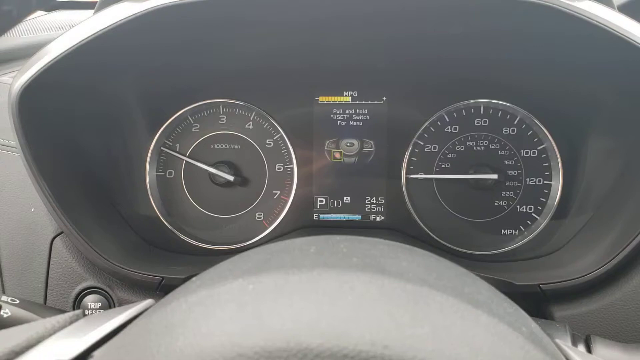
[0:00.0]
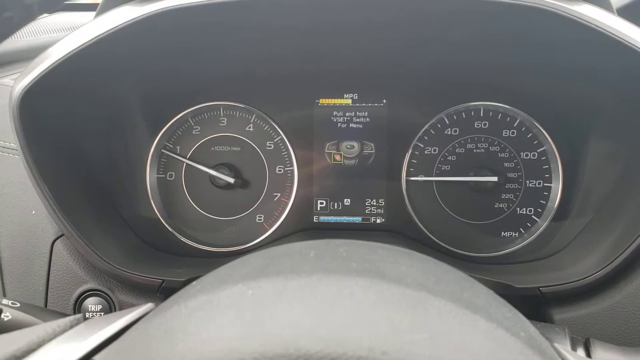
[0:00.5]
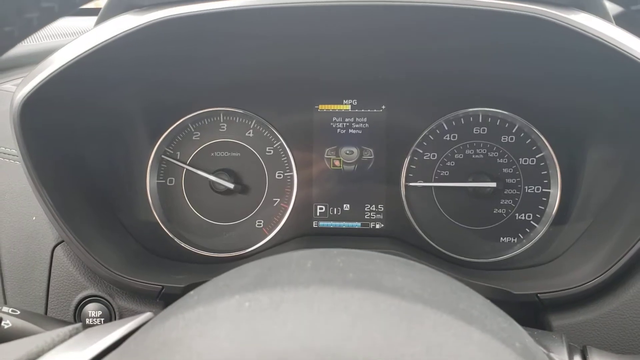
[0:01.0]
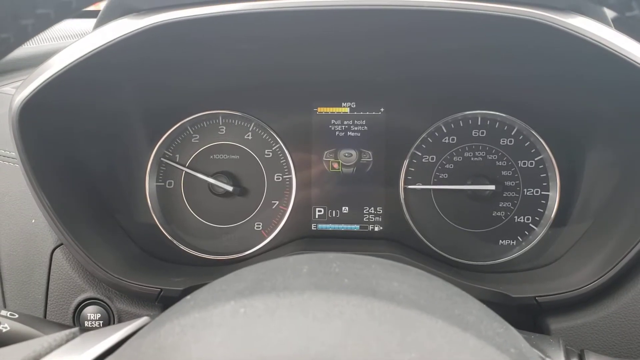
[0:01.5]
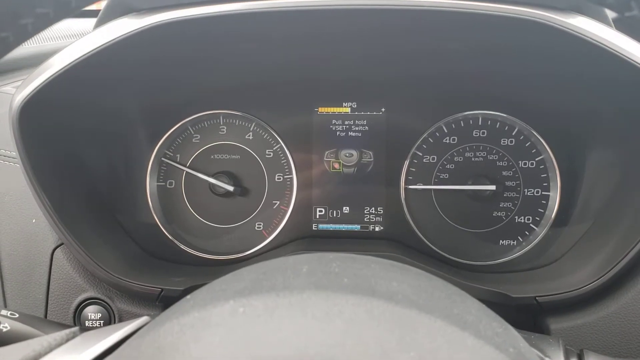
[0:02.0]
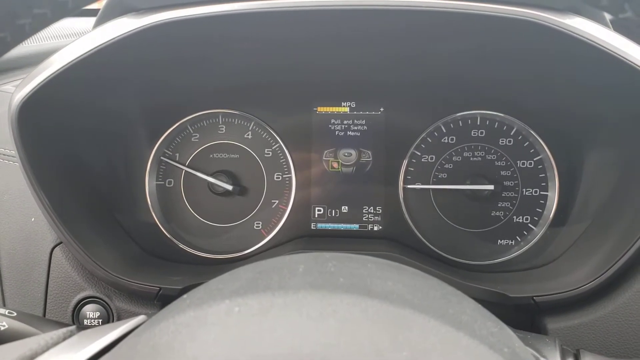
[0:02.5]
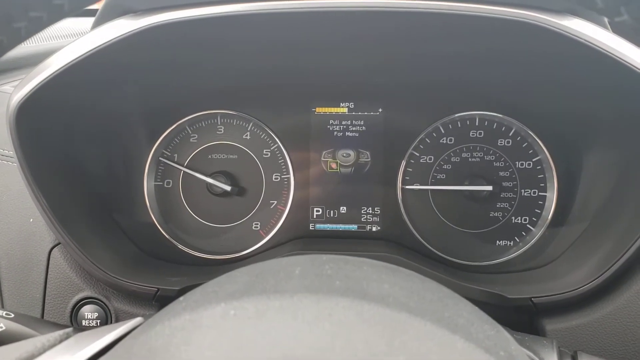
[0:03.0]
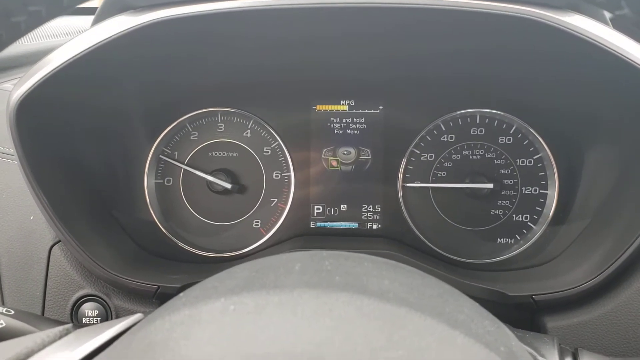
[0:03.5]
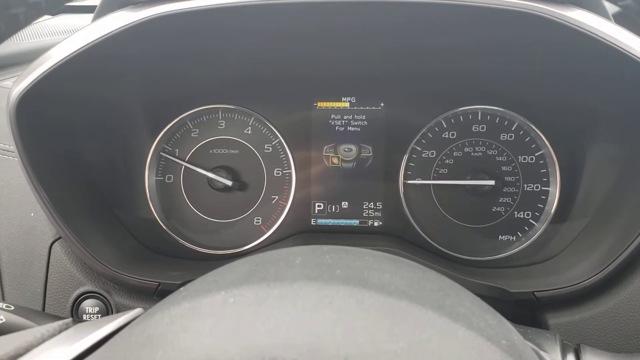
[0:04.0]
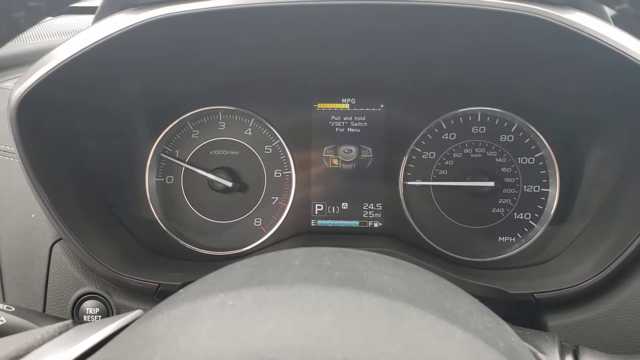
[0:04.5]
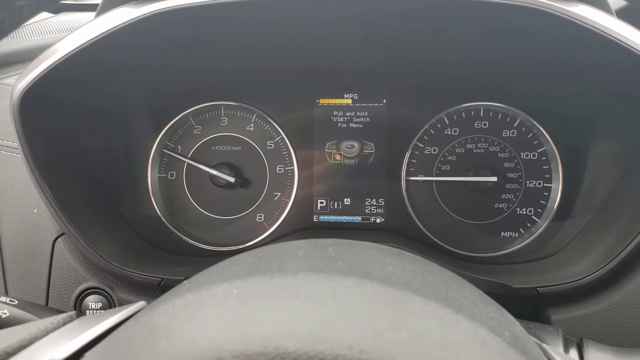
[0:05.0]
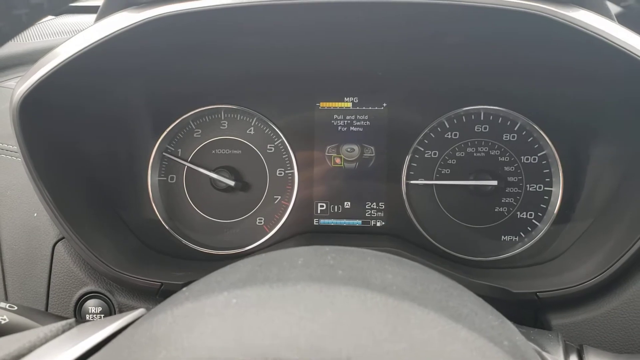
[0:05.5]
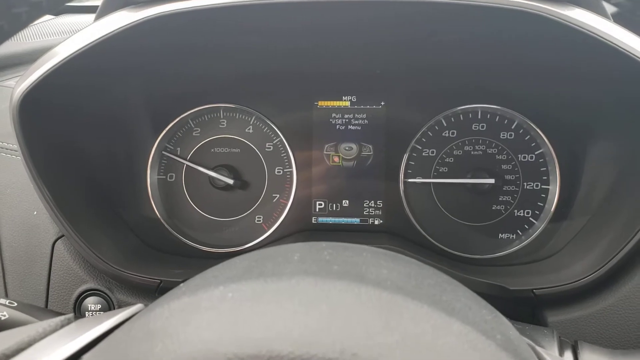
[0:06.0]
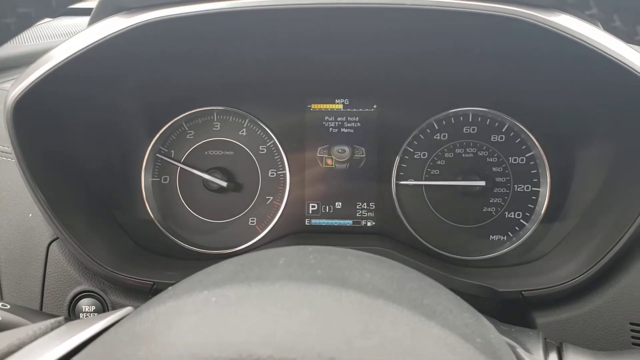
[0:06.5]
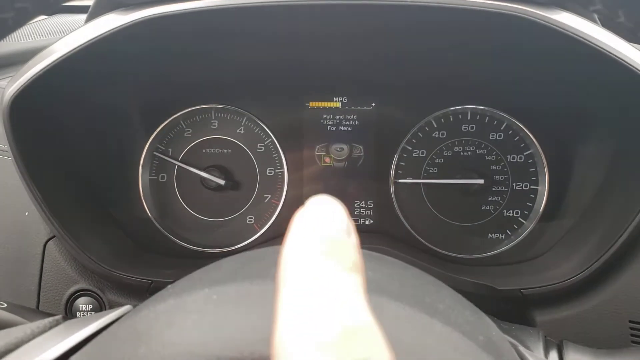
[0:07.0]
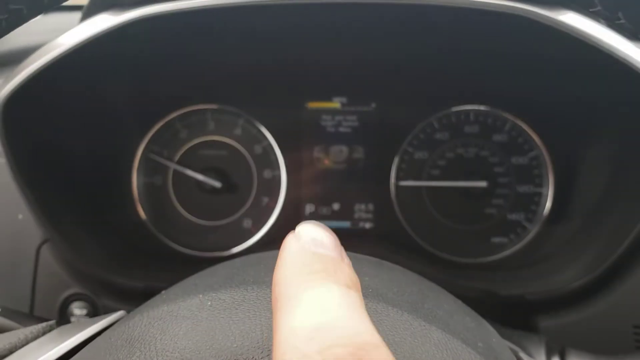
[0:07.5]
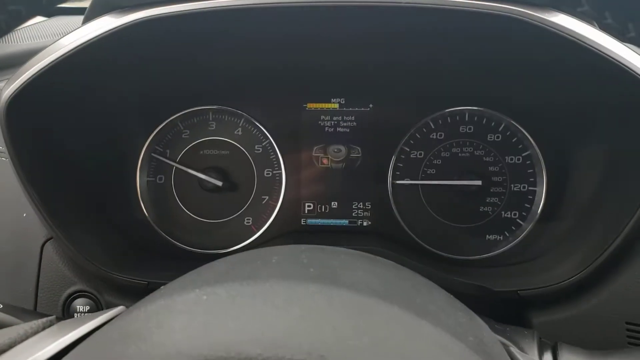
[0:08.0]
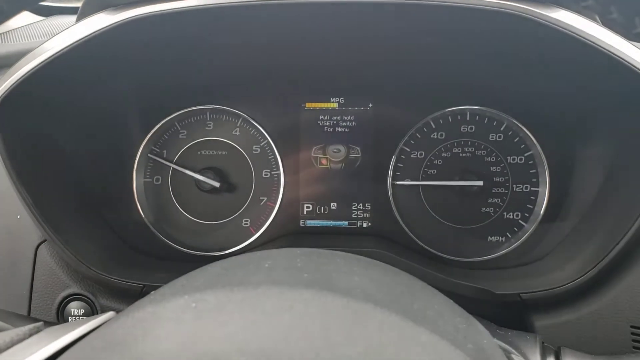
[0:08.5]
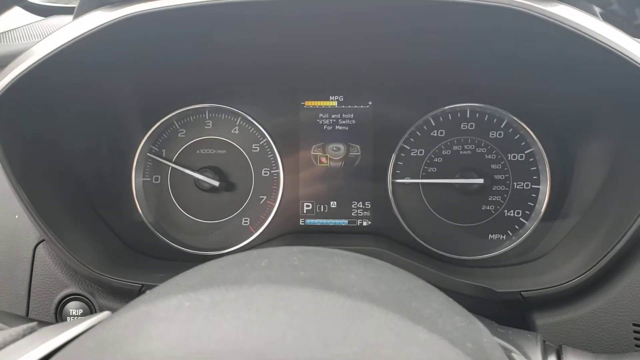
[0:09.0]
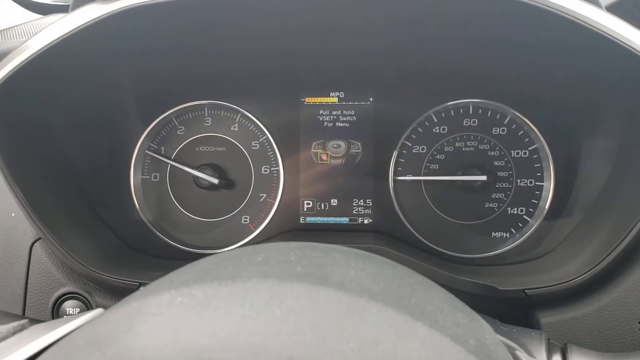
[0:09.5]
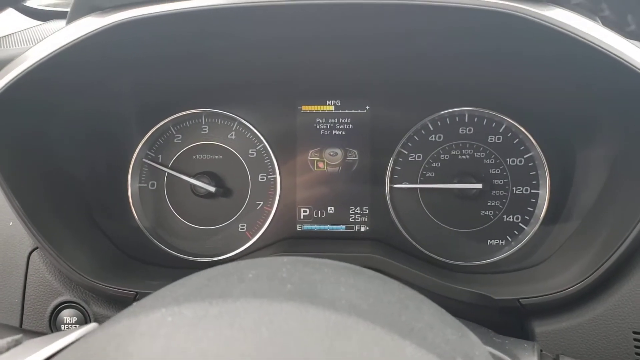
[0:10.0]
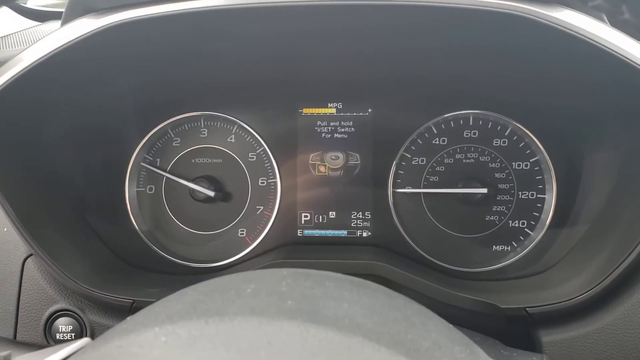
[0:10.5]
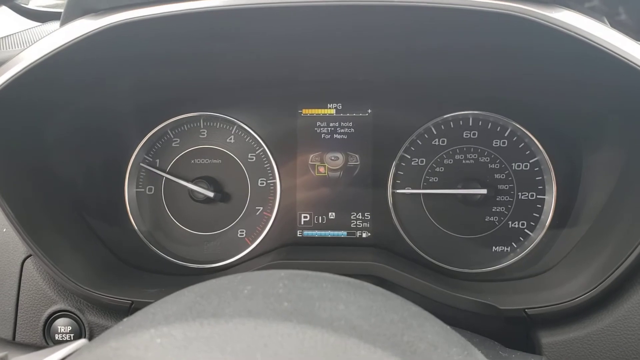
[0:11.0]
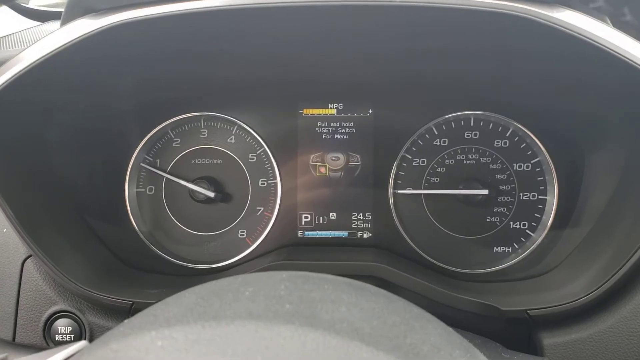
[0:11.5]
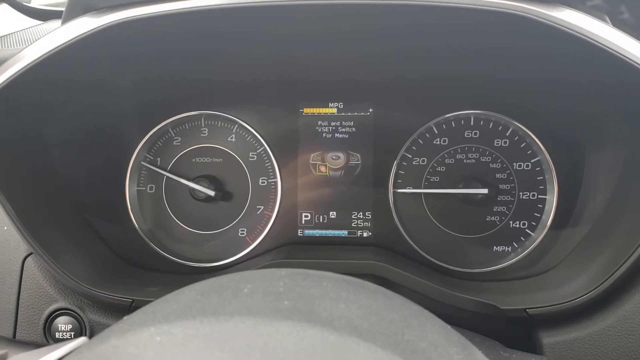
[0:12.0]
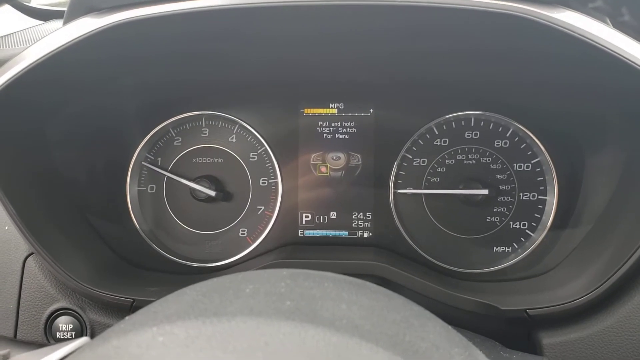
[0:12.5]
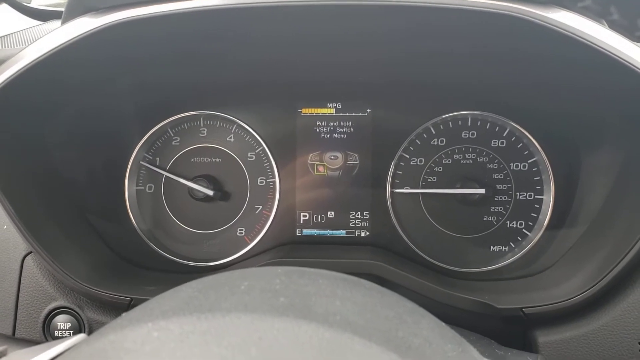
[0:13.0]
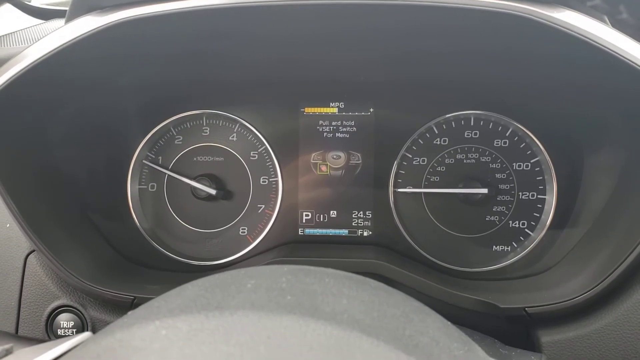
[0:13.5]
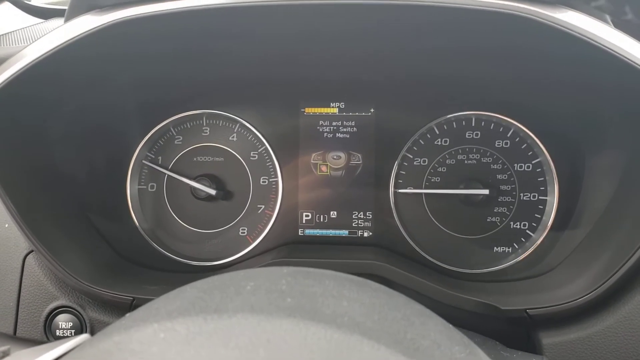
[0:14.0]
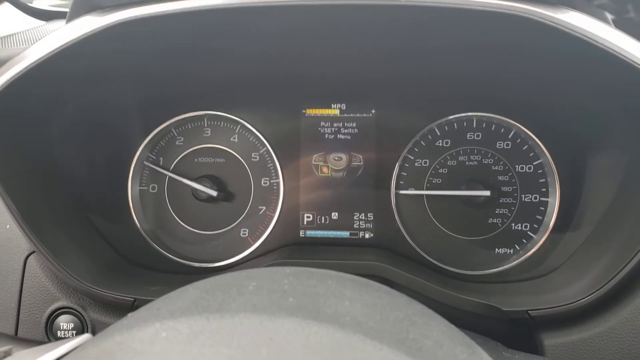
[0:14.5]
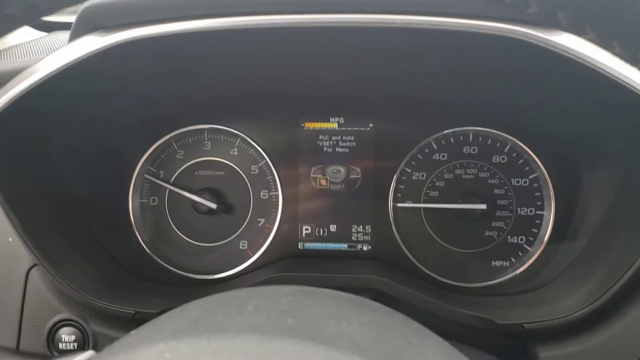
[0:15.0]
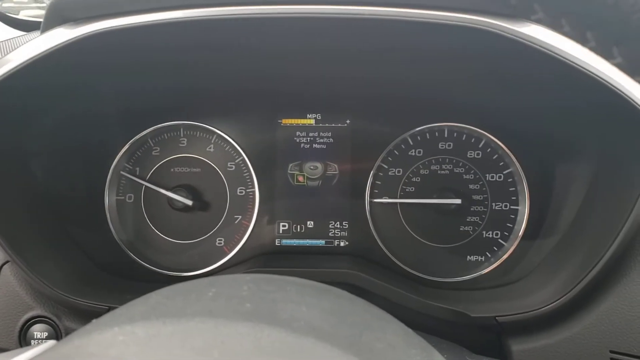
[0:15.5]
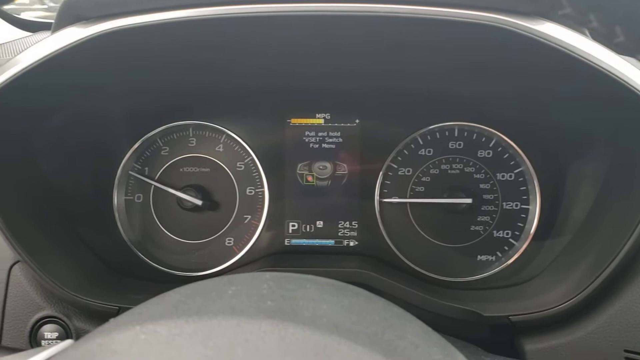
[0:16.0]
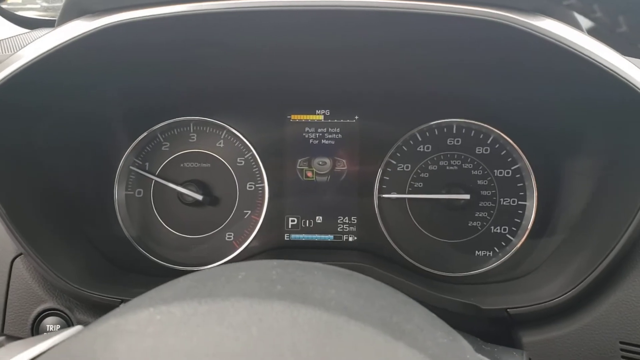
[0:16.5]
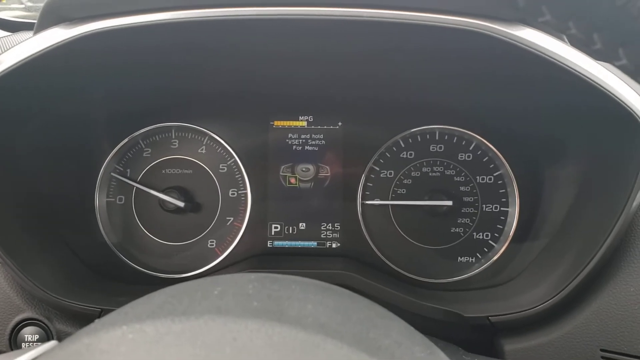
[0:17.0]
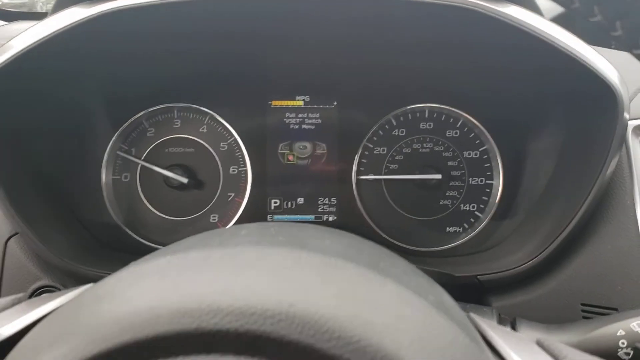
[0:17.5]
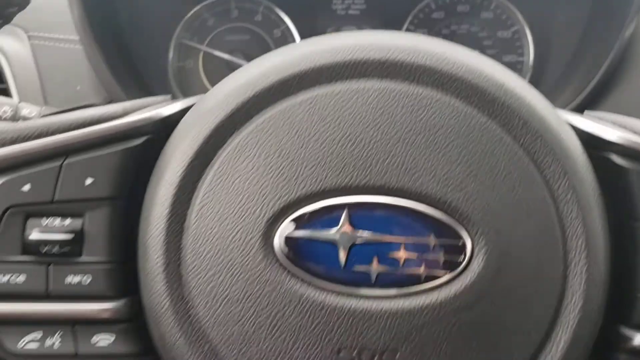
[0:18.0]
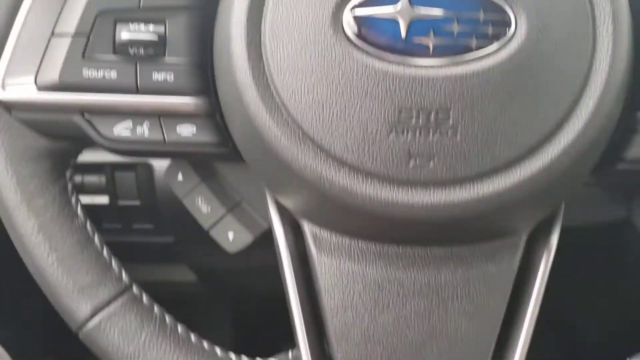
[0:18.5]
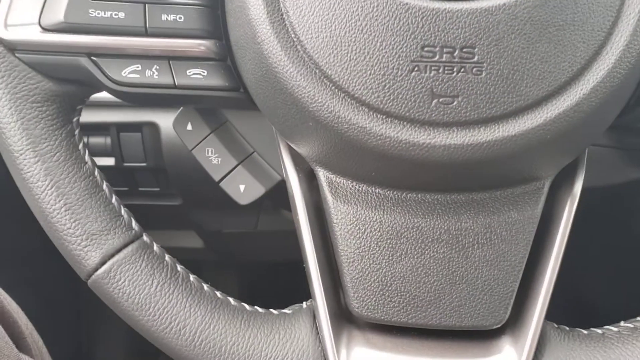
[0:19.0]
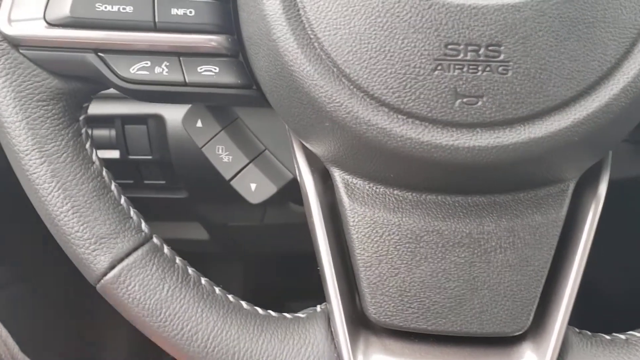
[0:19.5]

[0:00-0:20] The video shows a car's meters right above the steering wheel on the driver's side. Between the two meters, the screen appears to say "MPG" (miles per gallon). The words are blurry, but it looks like it says "pull and hold", maybe followed by "W set" or "reset", then "switch for", and a word with an H. A "P" is visible, so the car is apparently in park. A fuel meter goes from E to F and looks about three-fourths full. Above the F it says "25" and miles, and there is also a "24.5". At one point the person points with their pointer finger, apparently on the right hand. The camera then goes down a little, and the steering wheel appears to have the Subaru sign on it.